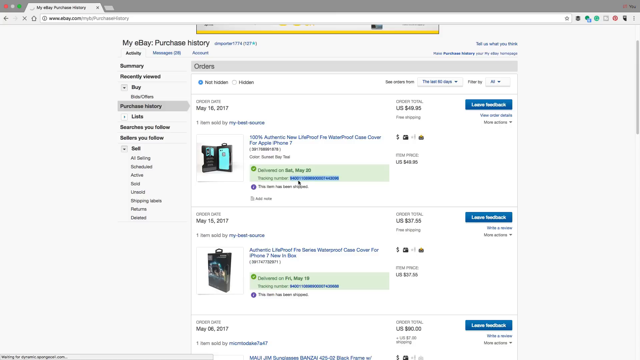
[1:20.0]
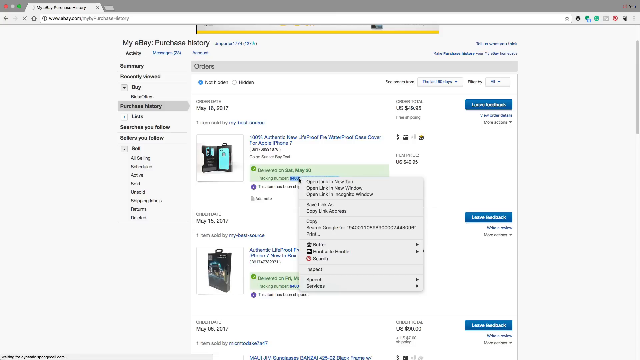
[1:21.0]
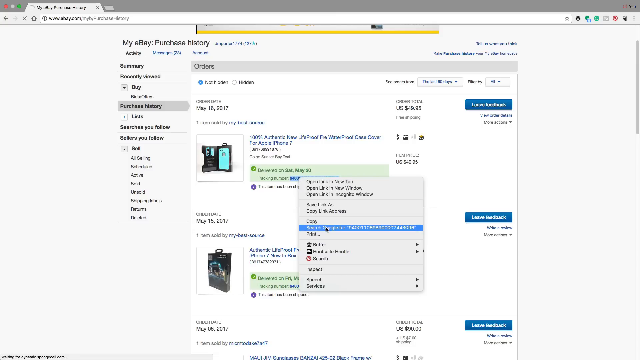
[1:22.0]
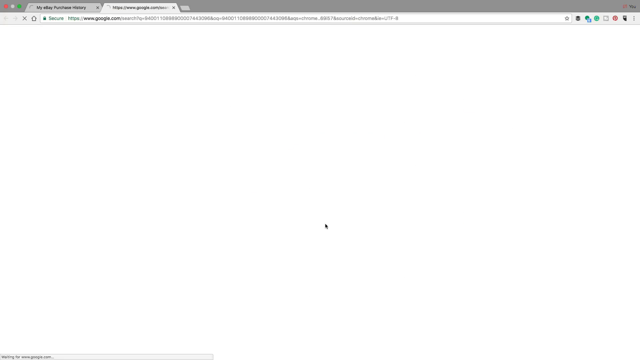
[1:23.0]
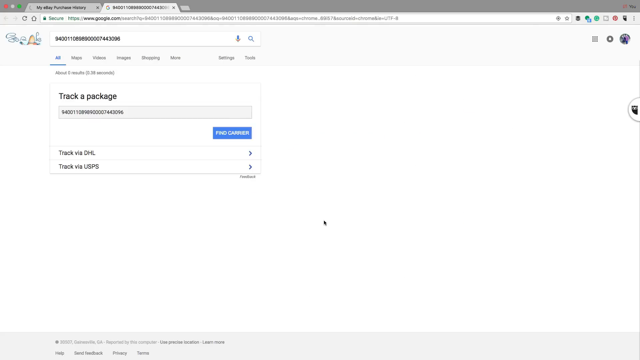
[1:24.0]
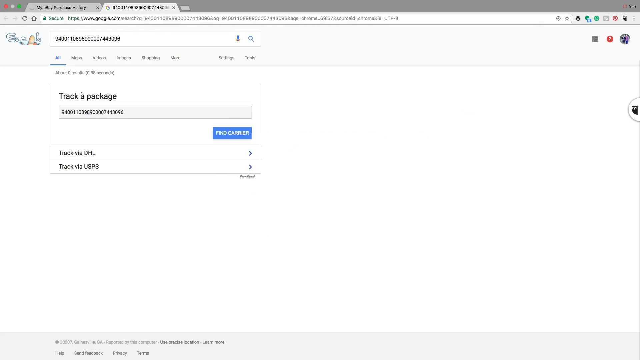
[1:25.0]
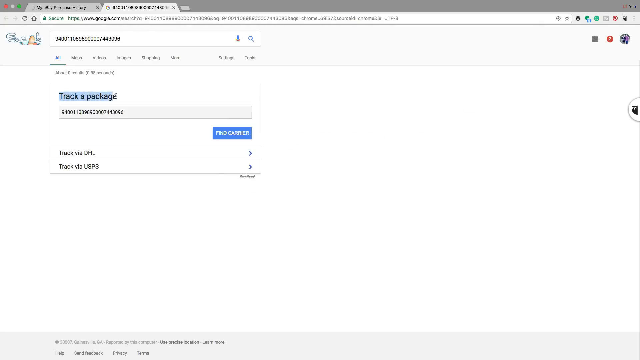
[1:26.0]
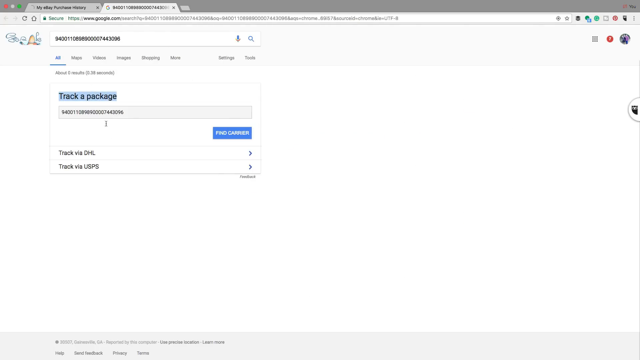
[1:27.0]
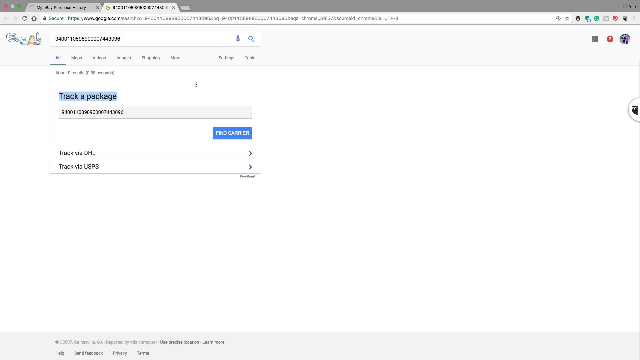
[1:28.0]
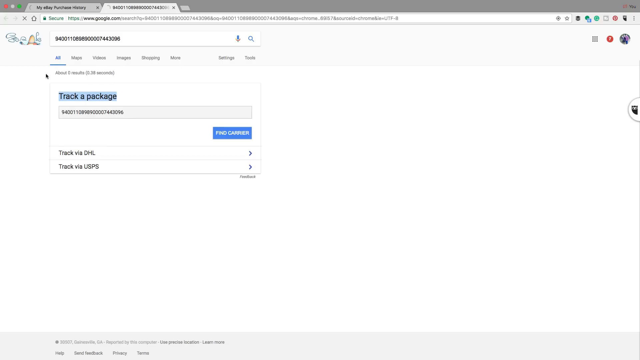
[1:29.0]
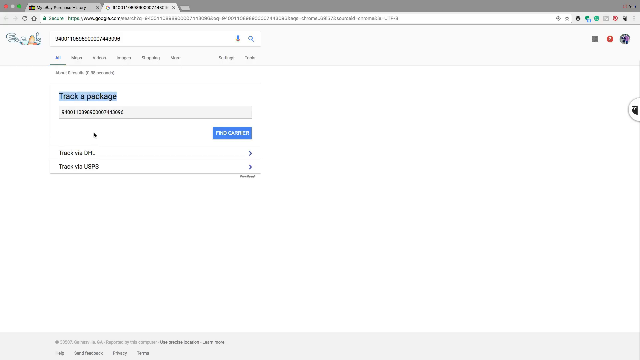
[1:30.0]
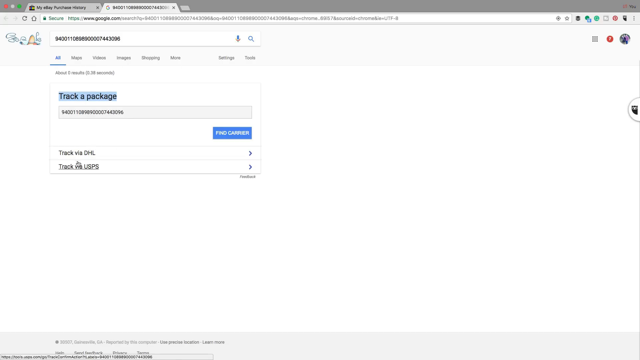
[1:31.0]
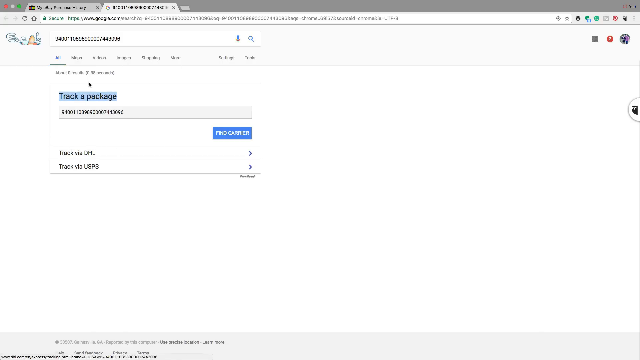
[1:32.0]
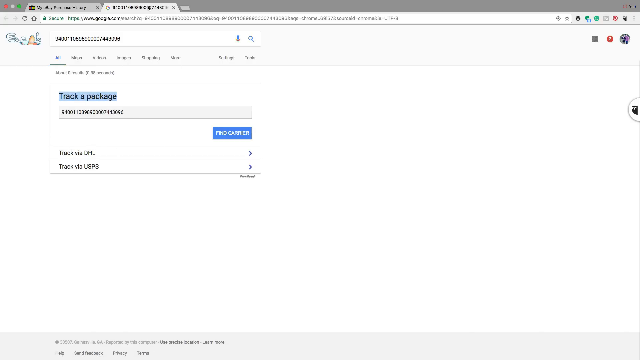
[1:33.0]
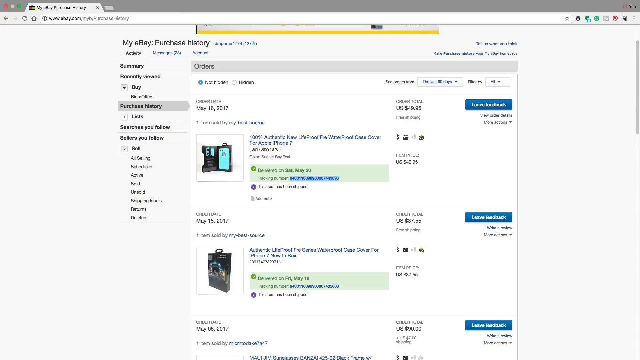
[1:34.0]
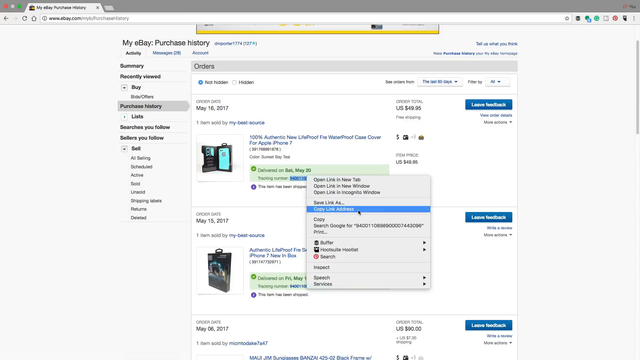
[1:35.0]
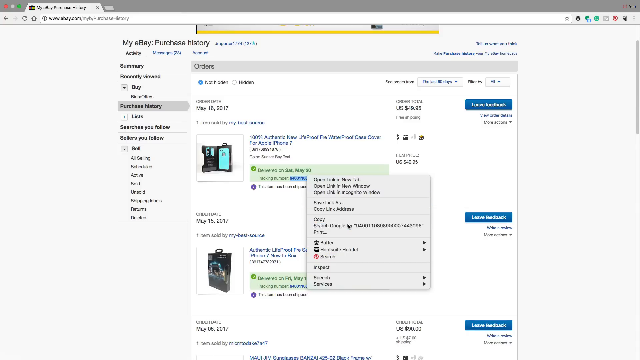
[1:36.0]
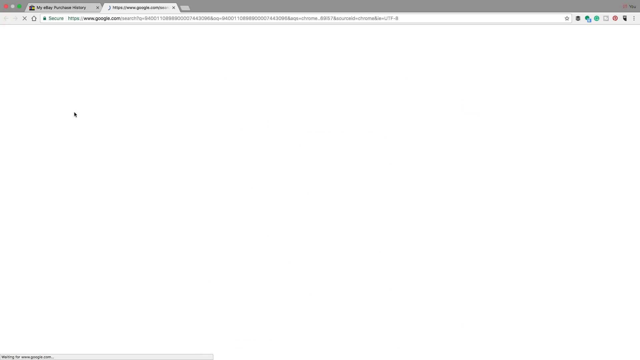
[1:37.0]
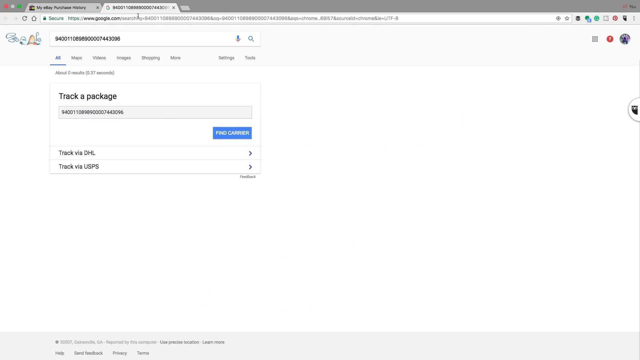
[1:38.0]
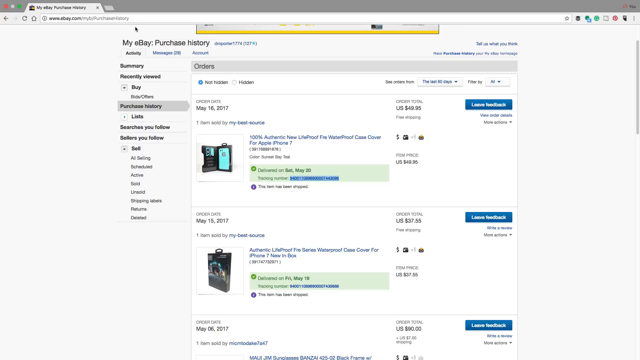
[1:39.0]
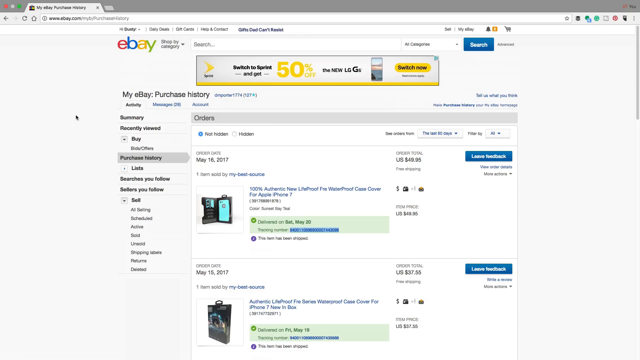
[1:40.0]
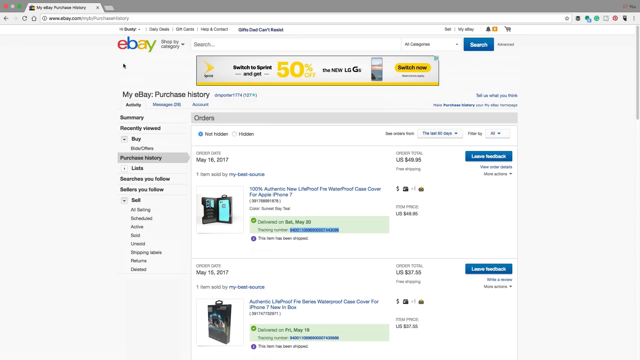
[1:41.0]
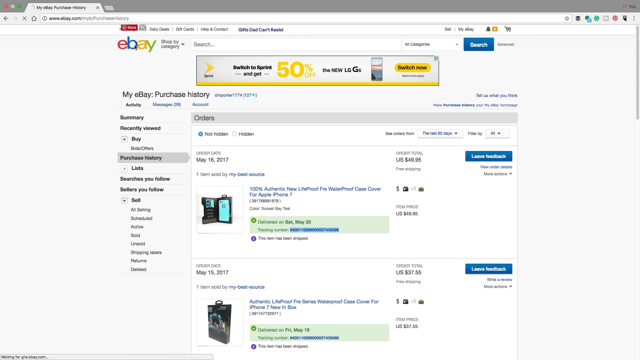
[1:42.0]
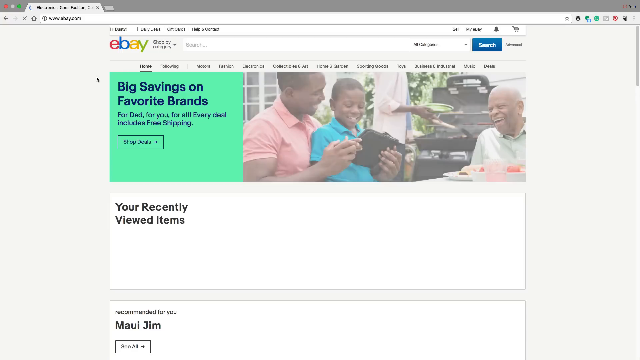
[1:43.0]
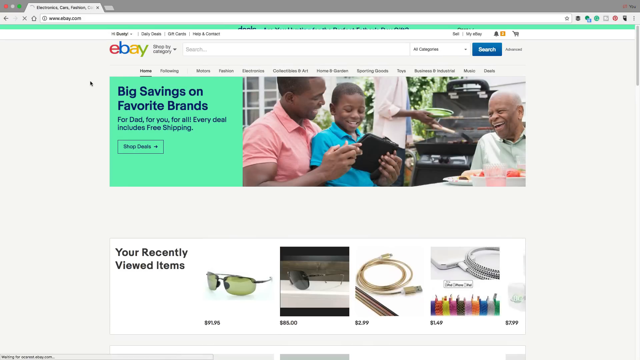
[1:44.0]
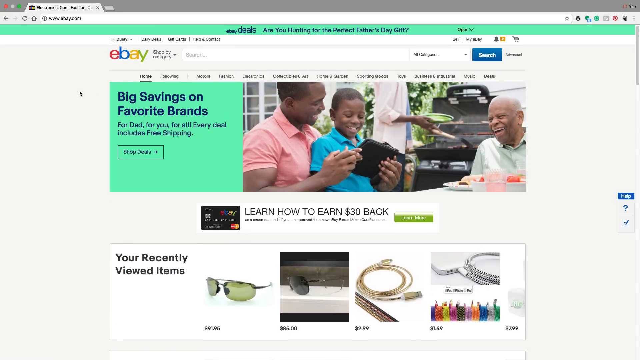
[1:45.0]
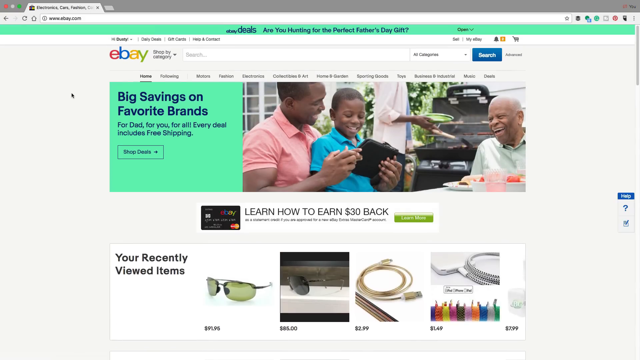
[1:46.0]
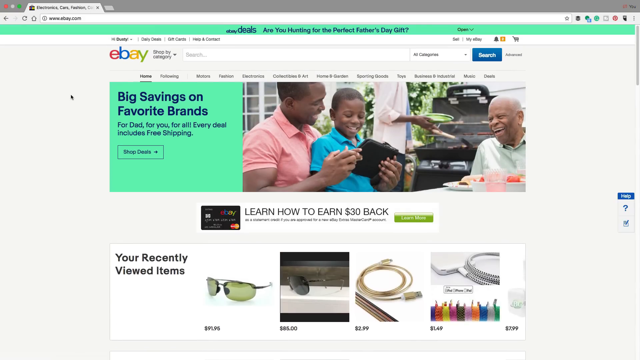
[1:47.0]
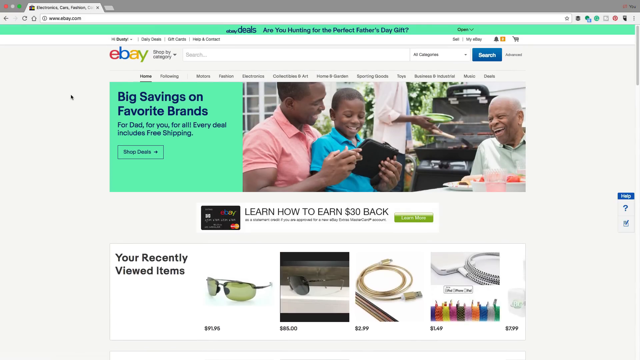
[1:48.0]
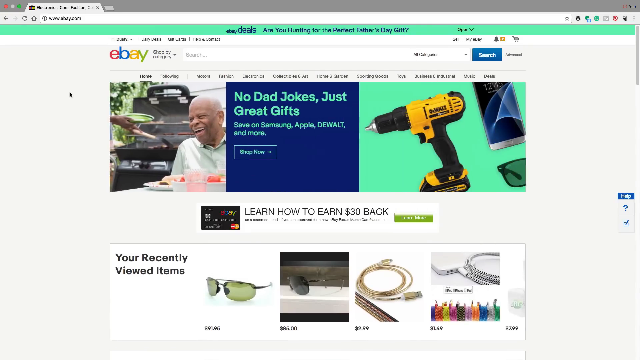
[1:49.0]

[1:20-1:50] The tracking info remains highlighted. The user right-clicks on it and goes to a different page to track the package through Google. The Google page shows possibly the search reference number, and the only thing shown is an icon that says "track a package" with the numbers inside and a button to click. The user goes over the components of the Google page, circling and highlighting the "track on DHL" and "track on USPS" portions. Circles keep appearing on the screen as they back out, completely exit the screen, and repeat the same steps. The video then returns to the eBay homepage, showing the eBay logo and a hero image that says "big savings on favorite brands" in a kind of mint green graphic, with various people in the photo to the right, and the same green at the very top above the navigation bar.